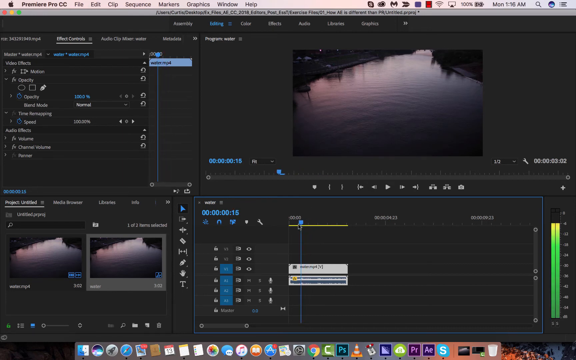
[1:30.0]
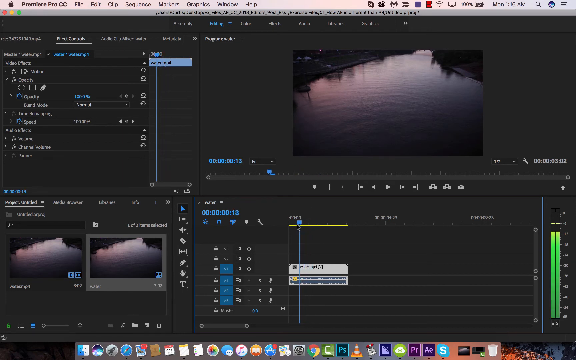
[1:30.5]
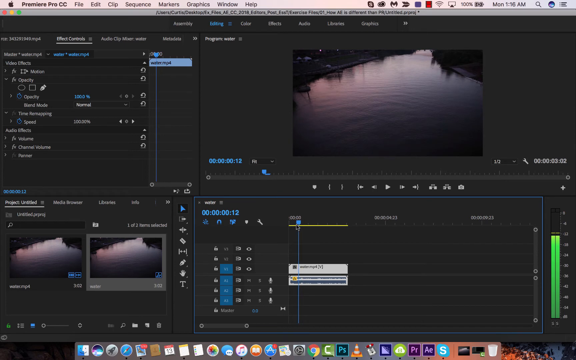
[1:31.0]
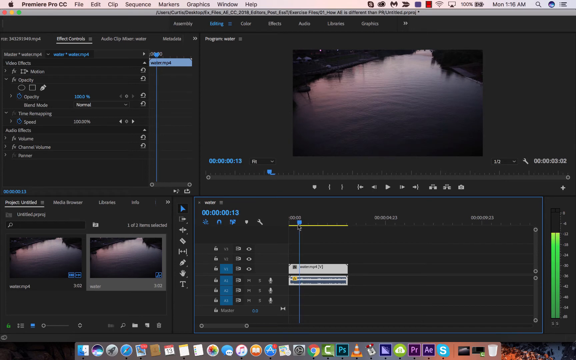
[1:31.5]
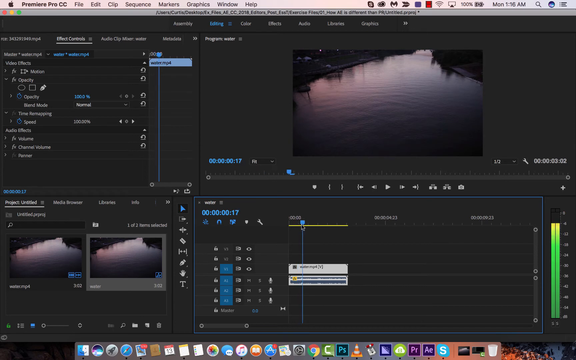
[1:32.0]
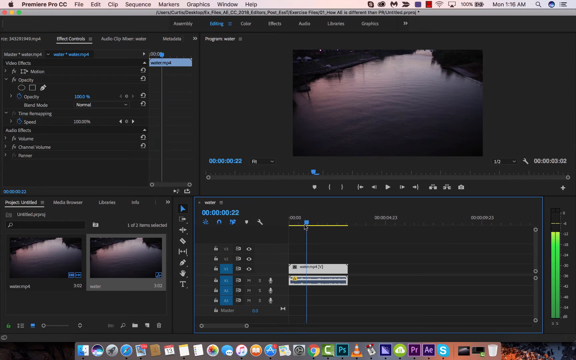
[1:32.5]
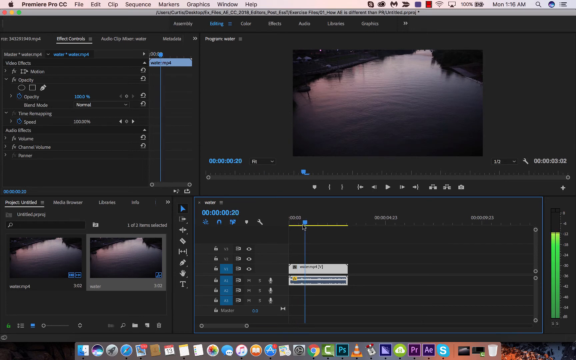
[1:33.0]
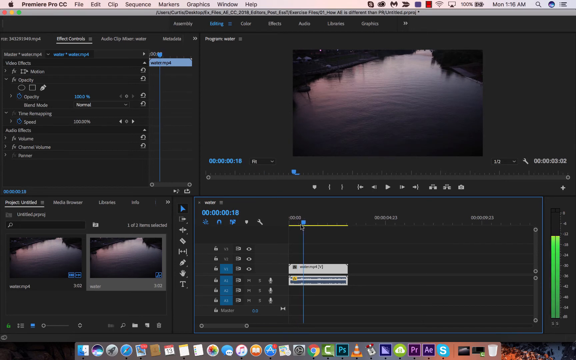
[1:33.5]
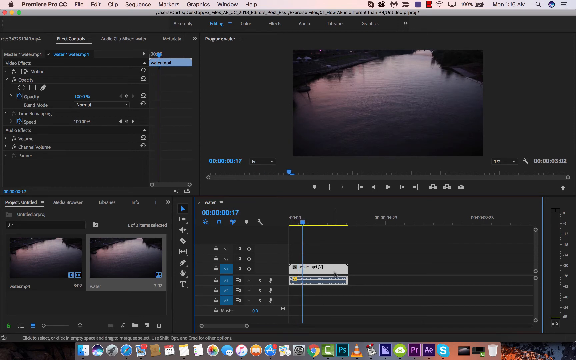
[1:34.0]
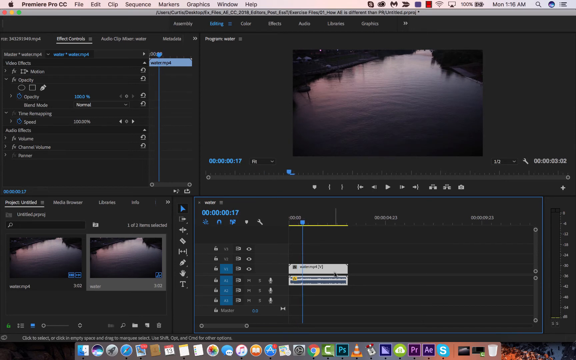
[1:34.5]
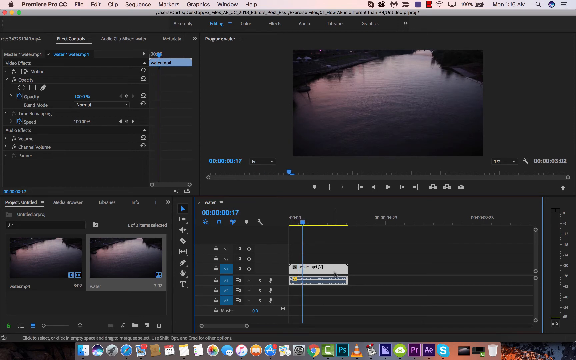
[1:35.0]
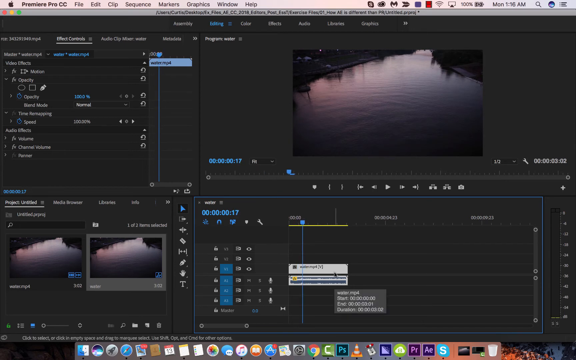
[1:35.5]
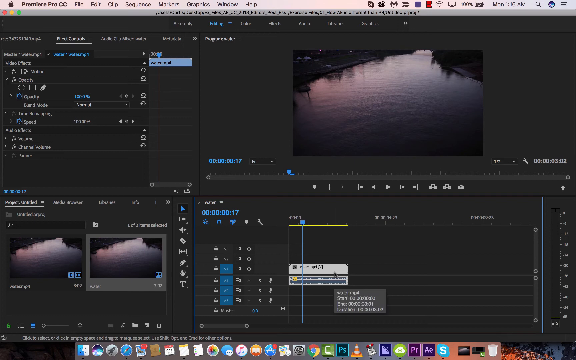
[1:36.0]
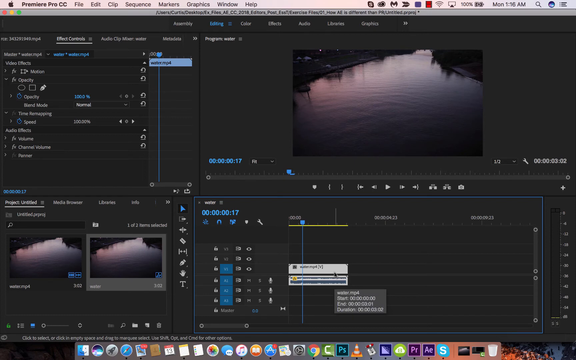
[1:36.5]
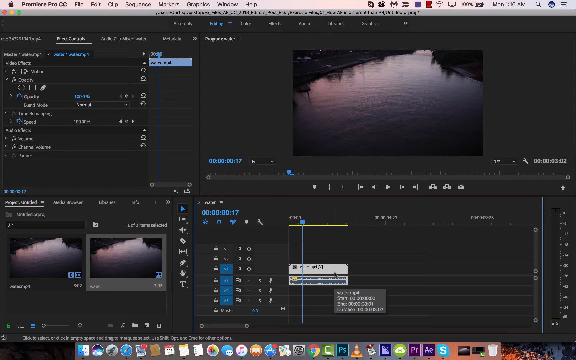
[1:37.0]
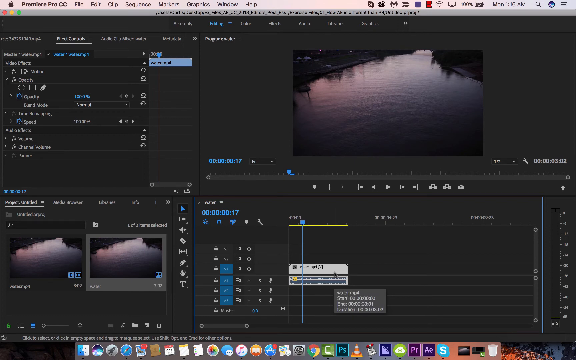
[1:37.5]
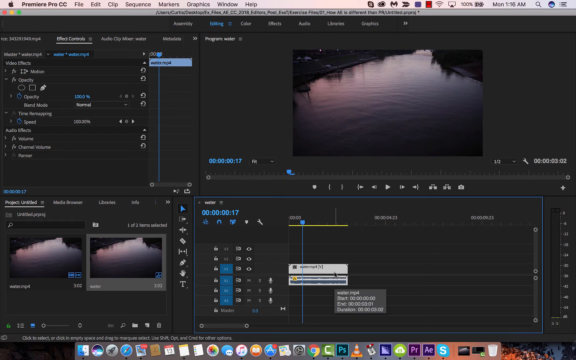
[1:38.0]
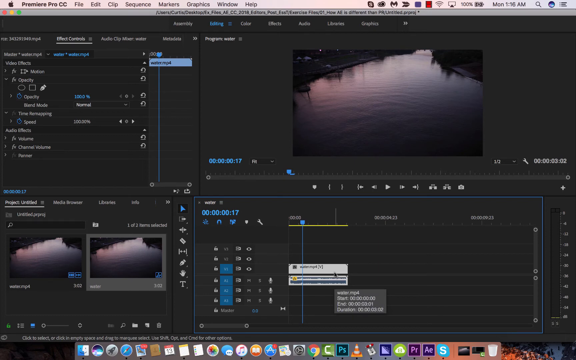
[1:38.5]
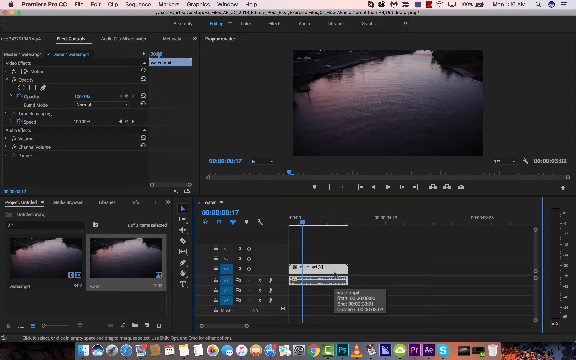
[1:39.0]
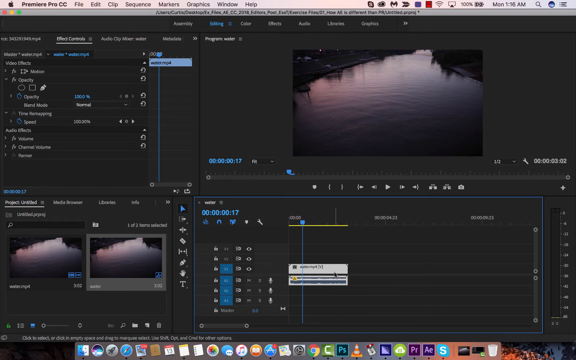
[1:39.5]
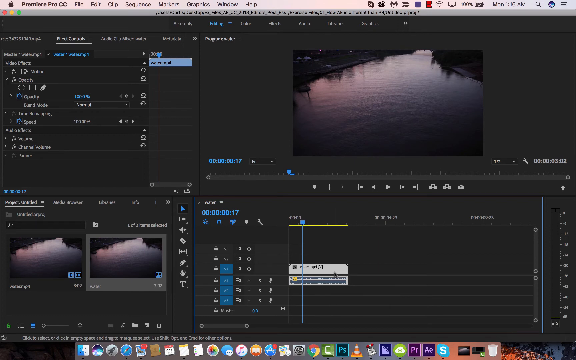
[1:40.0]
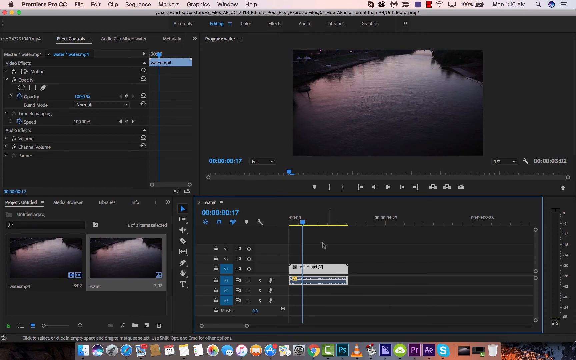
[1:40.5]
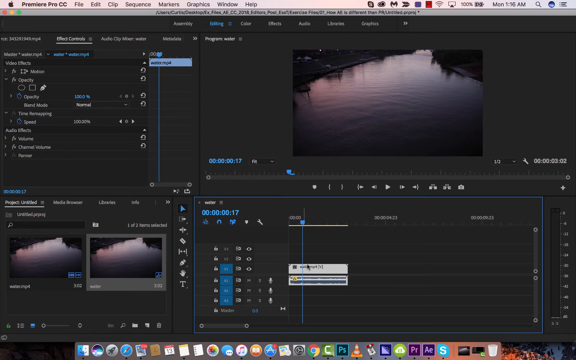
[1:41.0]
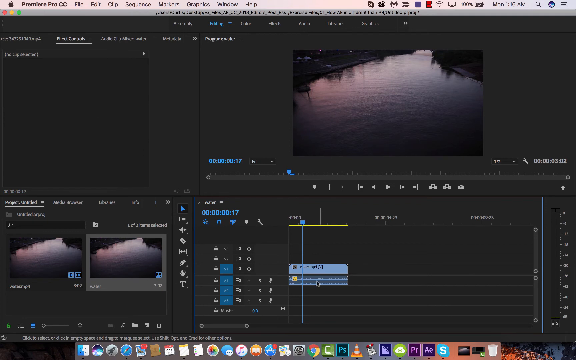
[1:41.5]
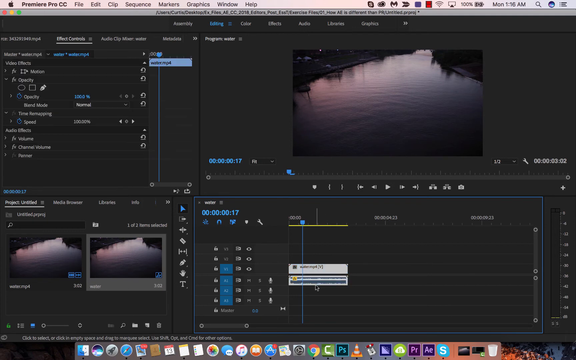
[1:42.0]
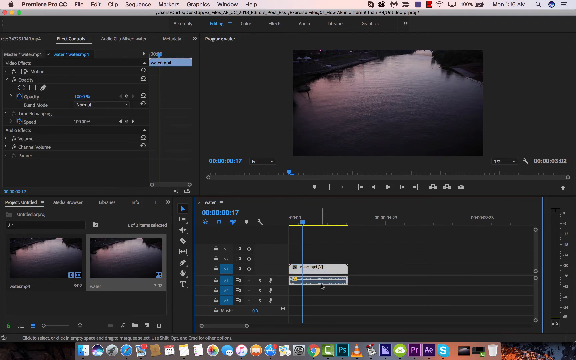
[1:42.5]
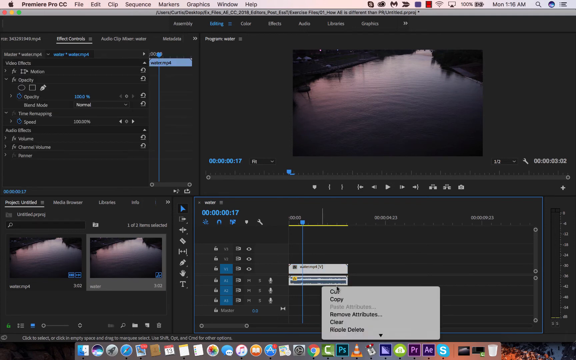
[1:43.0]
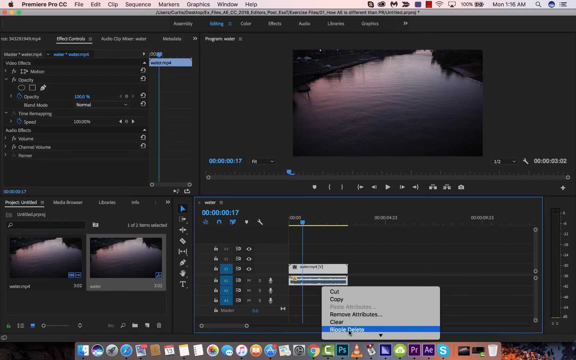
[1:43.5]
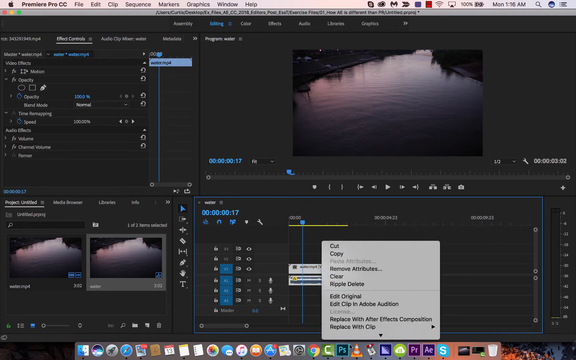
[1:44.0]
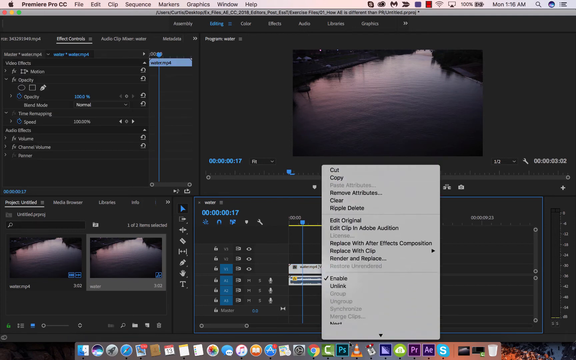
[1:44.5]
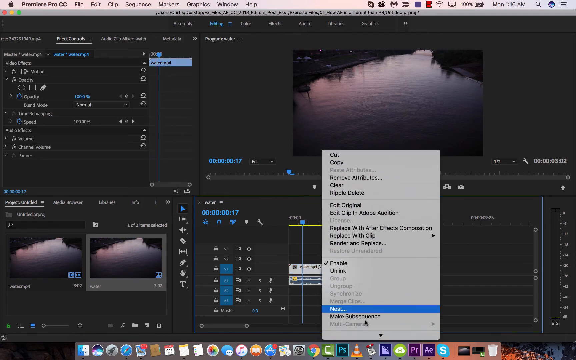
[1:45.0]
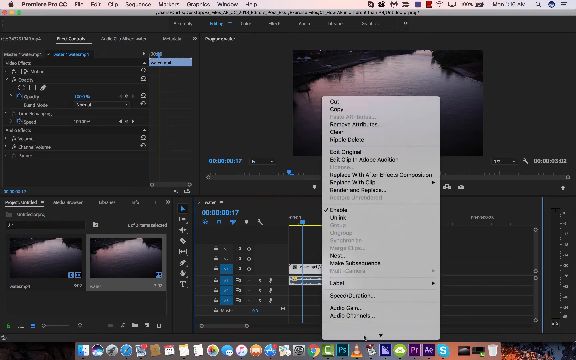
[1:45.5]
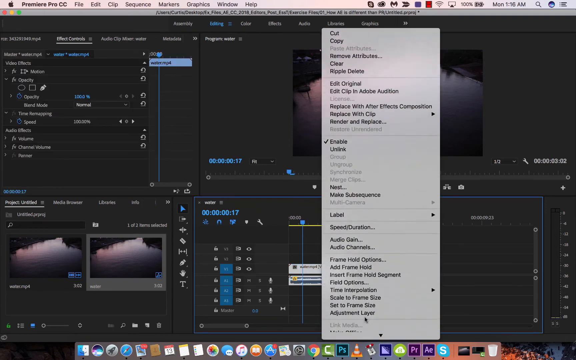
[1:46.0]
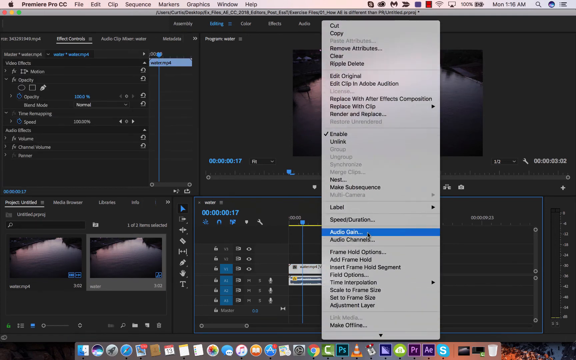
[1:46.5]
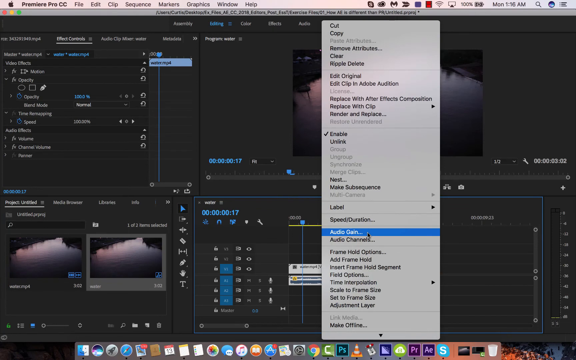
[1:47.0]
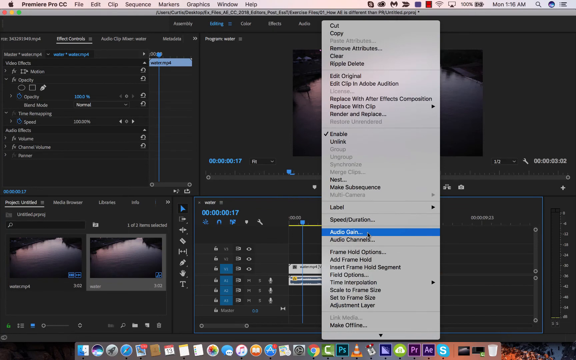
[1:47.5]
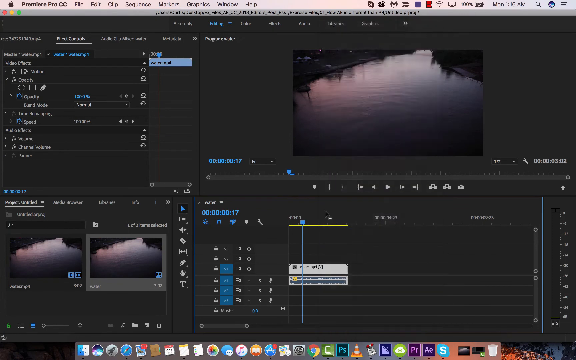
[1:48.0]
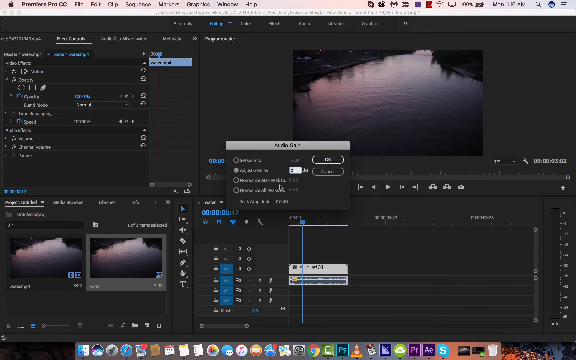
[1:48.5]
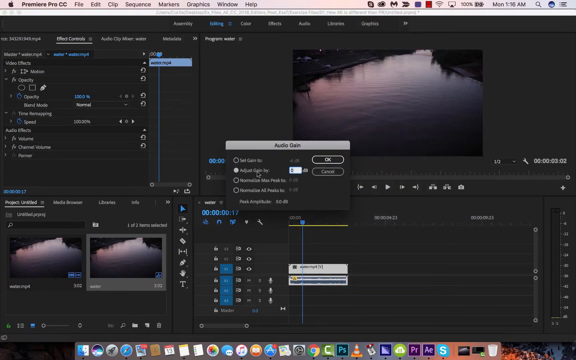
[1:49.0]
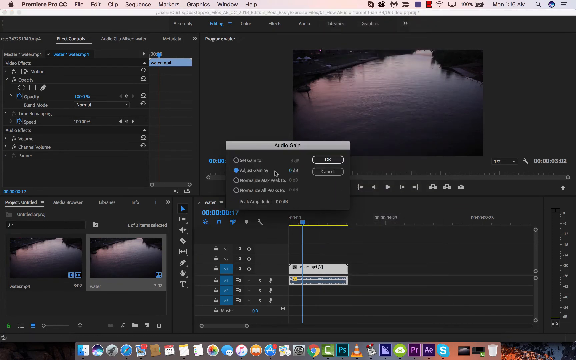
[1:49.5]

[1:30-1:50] The frame is a little wider than it is tall and appears to show someone's desktop, with an Apple in the upper left indicating macOS. To its right is Premiere Pro CC, followed by the menus File, Edit, Clip, Sequence, Markers, Graphics, Window and Help, and icons plus the day and time in the upper right. The upper left has some navigation menus, and the top half, center and right, shows a really dimly lit body of water. Land is visible in the upper left and upper right, and it is pretty dark overall; from the upper left toward the lower right the reflection of either a sunrise or a sunset transitions from pink to purple to dark blue and finally gray in the lower right. The lower-left corner holds the image twice, possibly for editing purposes. In the lower right the cursor moves over some options; it looks like one is right-clicked, a big menu comes up, the cursor goes down to Audio Gain, and OK is clicked.